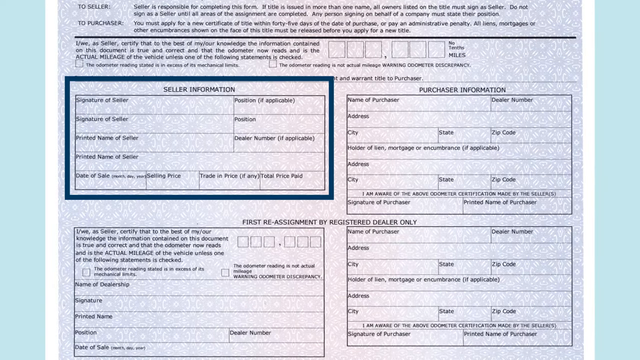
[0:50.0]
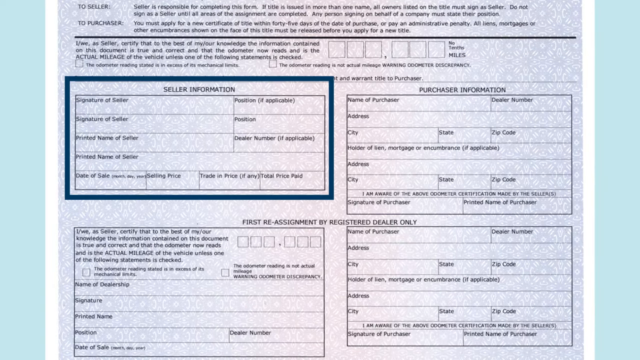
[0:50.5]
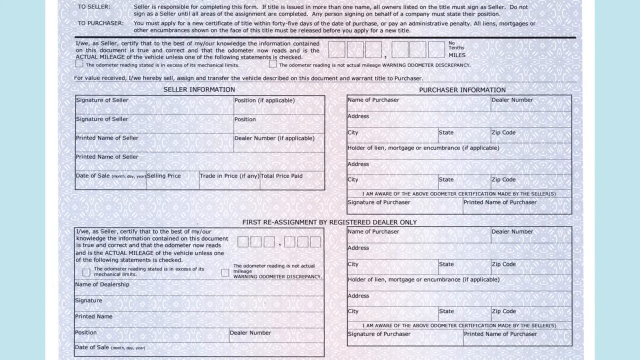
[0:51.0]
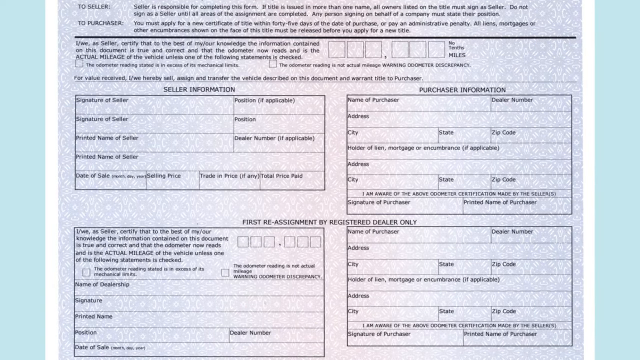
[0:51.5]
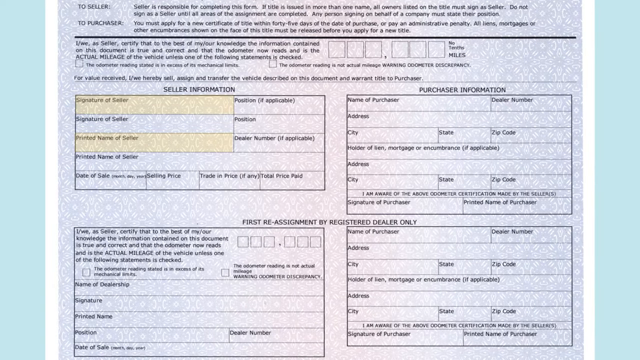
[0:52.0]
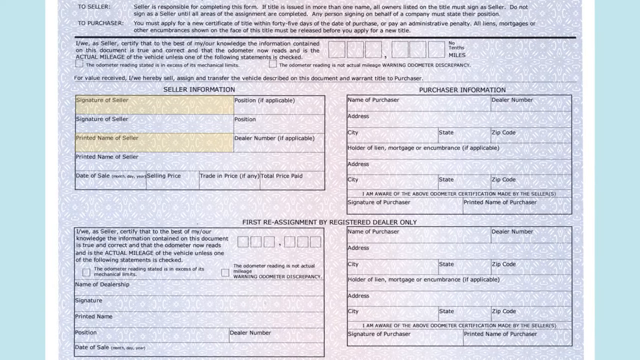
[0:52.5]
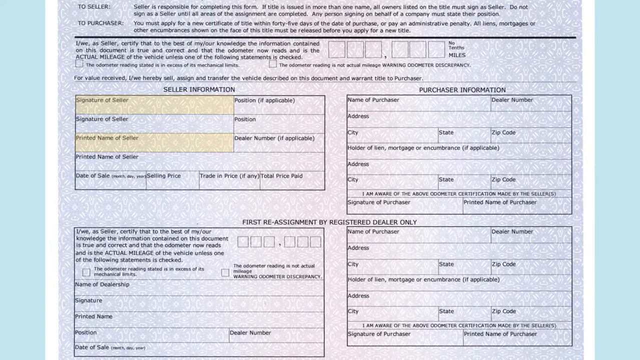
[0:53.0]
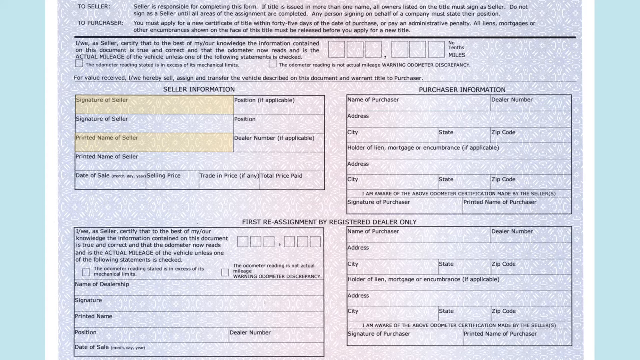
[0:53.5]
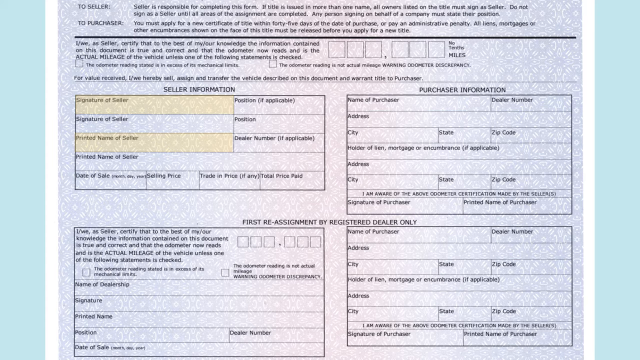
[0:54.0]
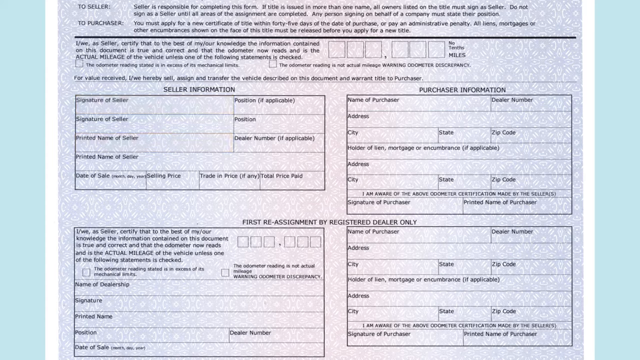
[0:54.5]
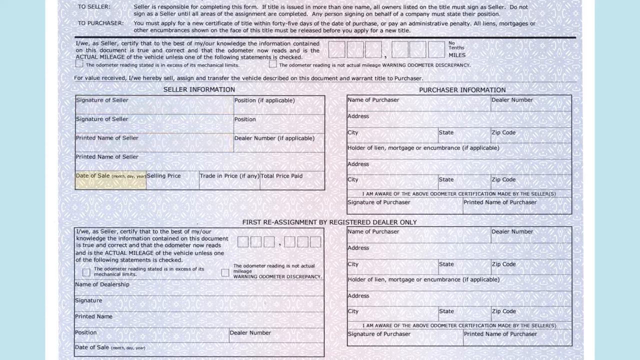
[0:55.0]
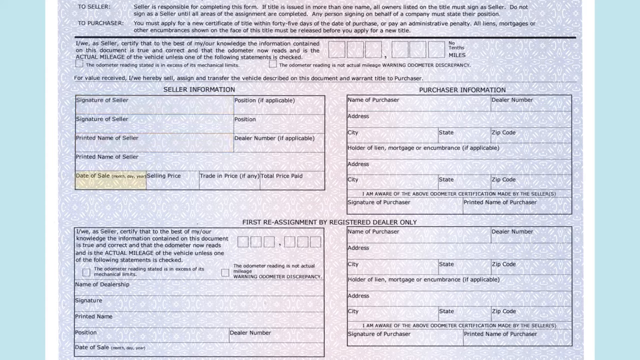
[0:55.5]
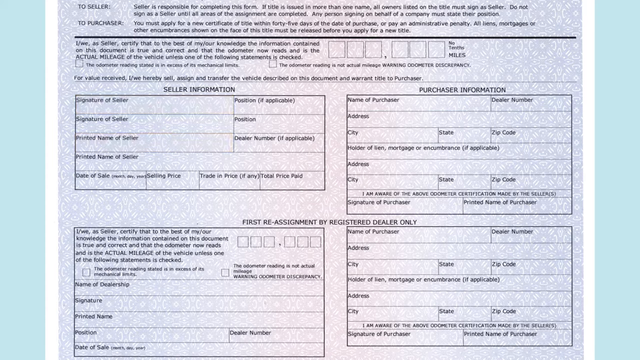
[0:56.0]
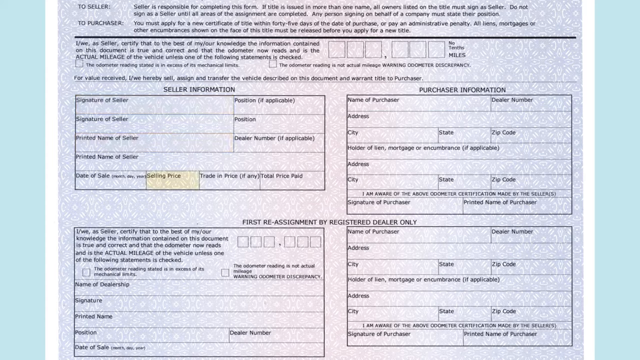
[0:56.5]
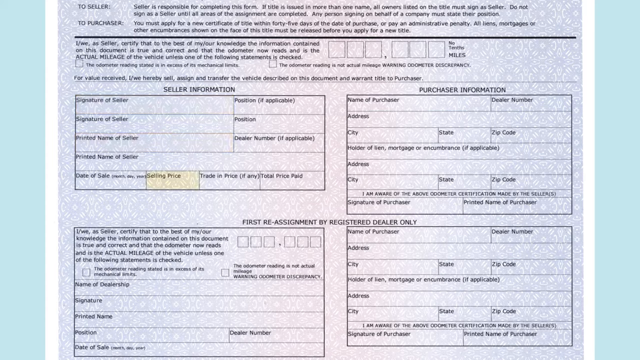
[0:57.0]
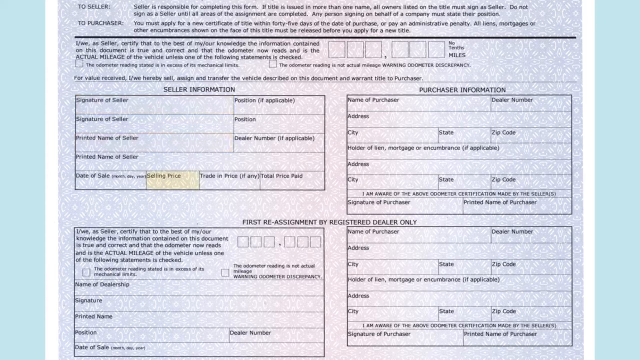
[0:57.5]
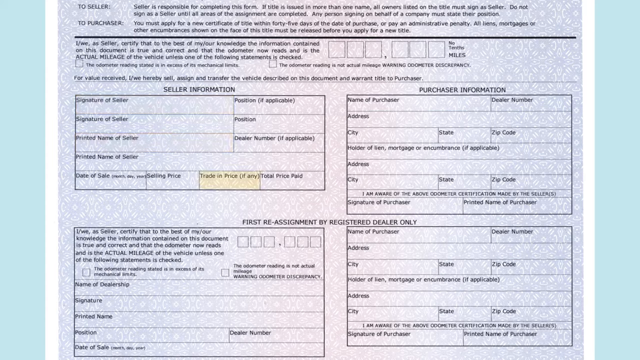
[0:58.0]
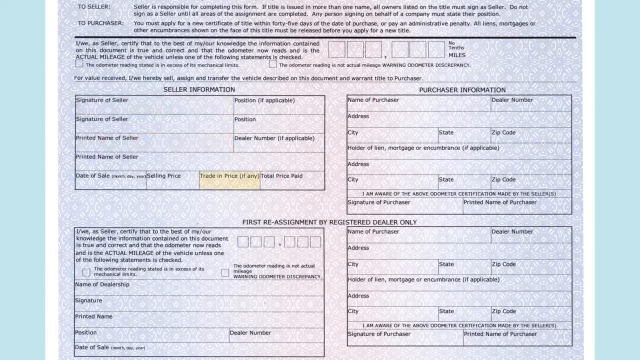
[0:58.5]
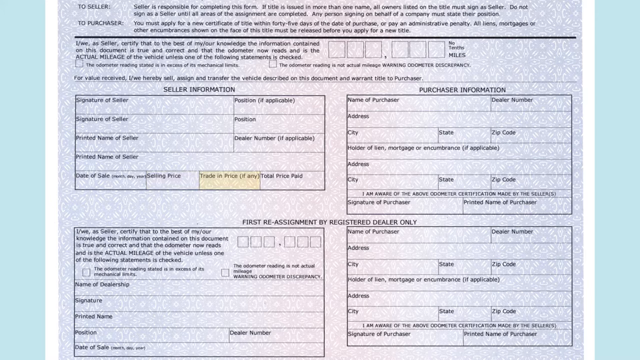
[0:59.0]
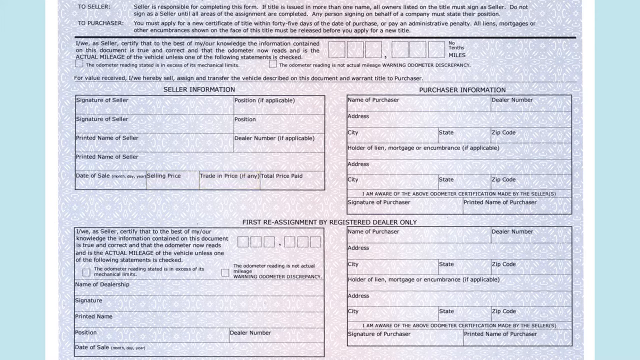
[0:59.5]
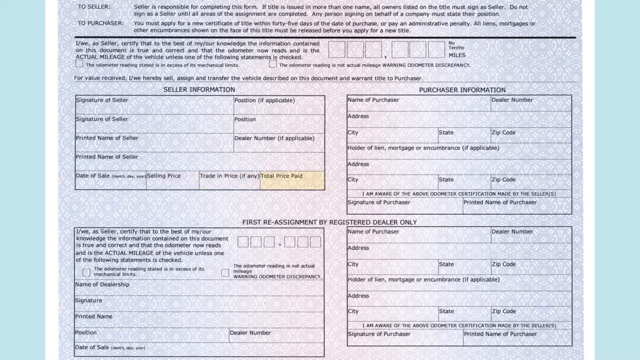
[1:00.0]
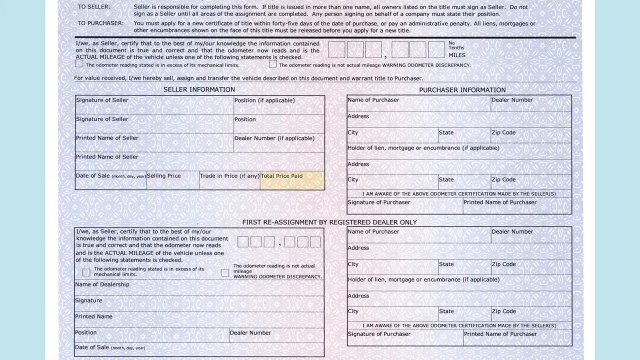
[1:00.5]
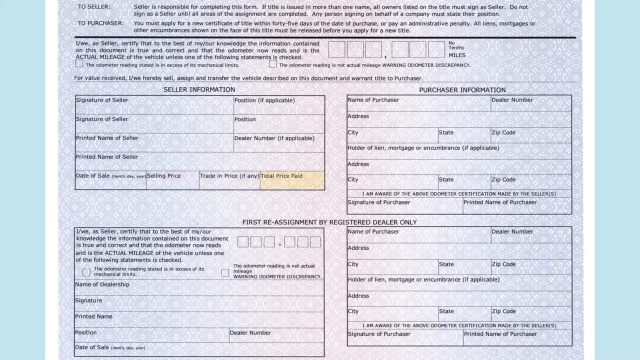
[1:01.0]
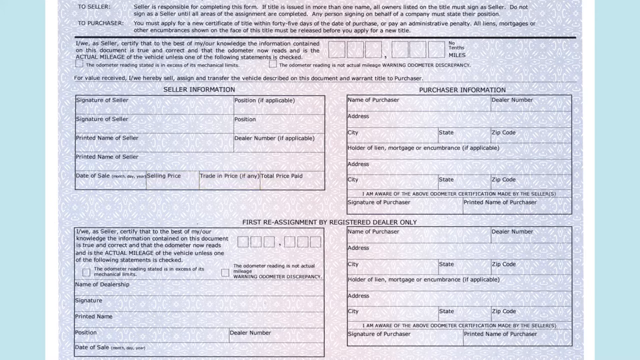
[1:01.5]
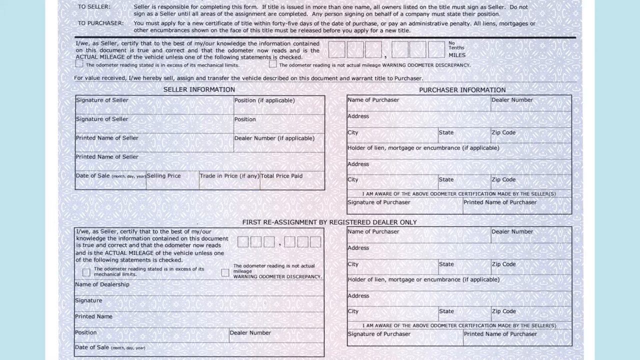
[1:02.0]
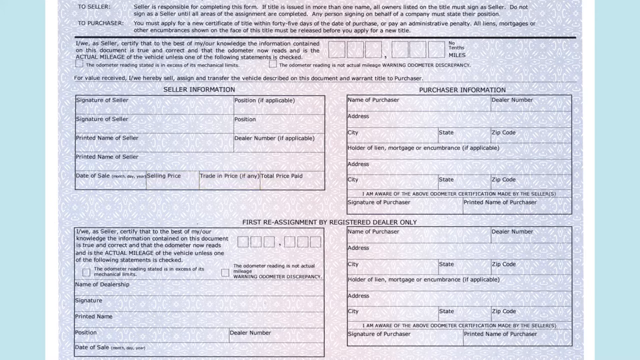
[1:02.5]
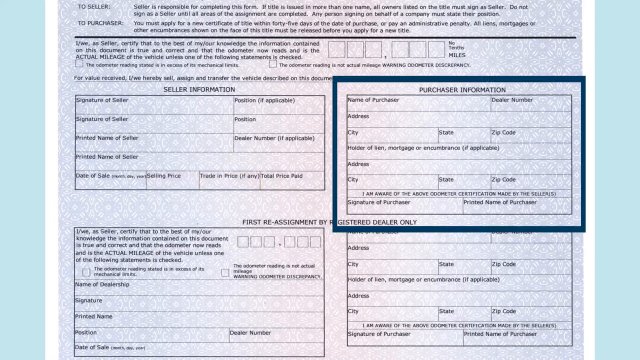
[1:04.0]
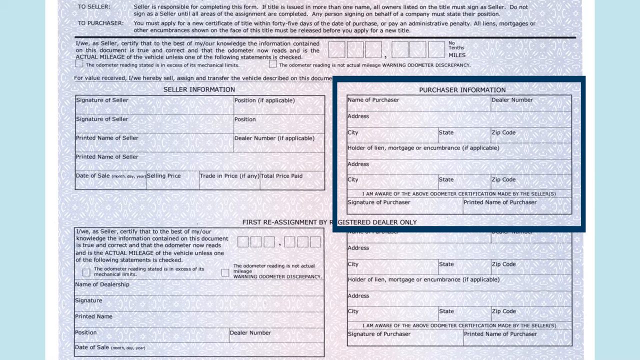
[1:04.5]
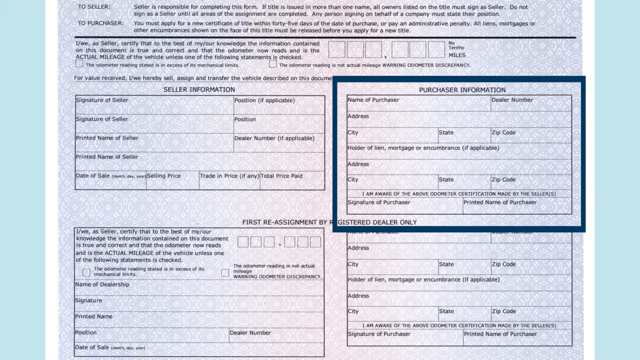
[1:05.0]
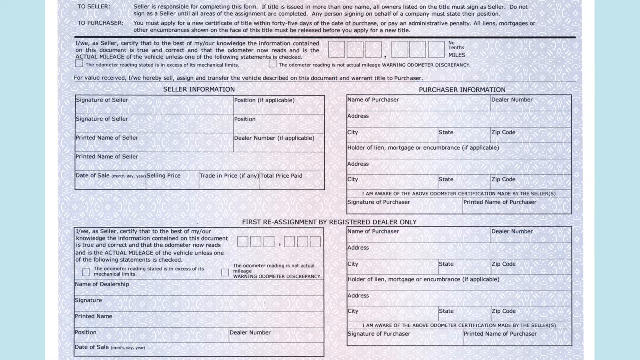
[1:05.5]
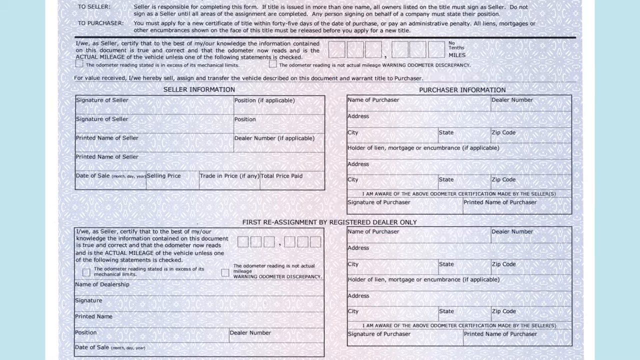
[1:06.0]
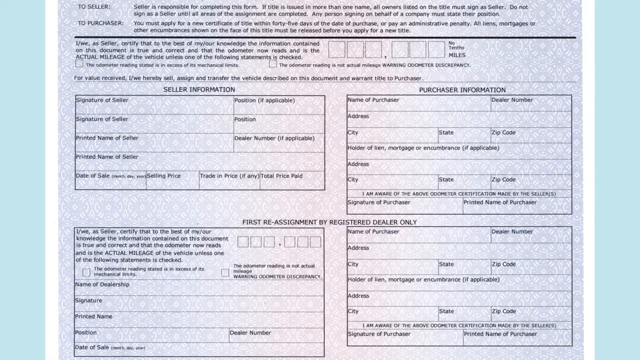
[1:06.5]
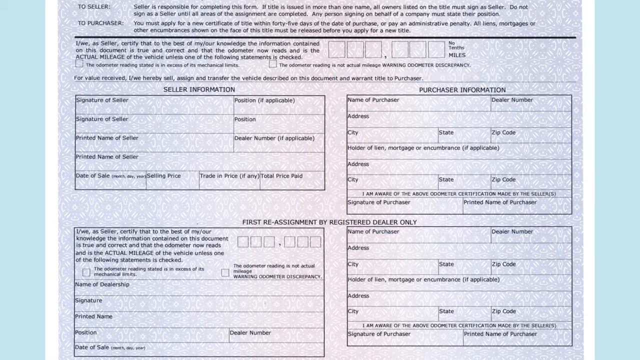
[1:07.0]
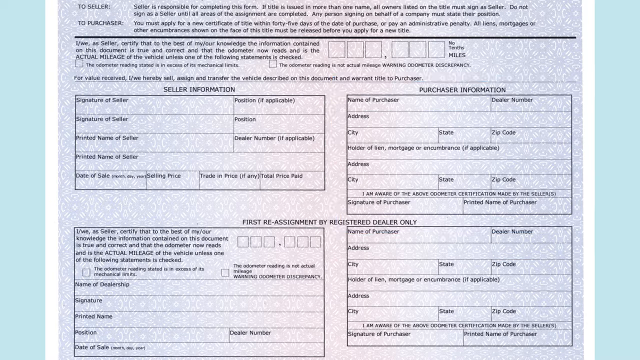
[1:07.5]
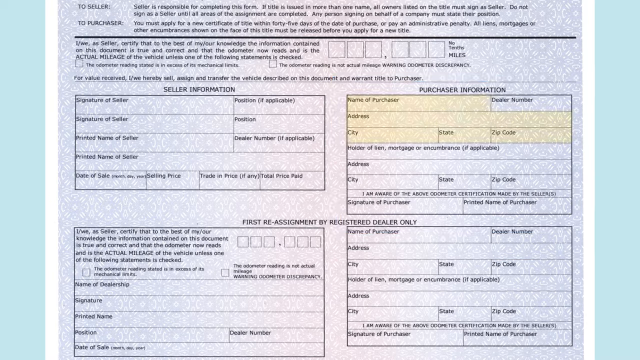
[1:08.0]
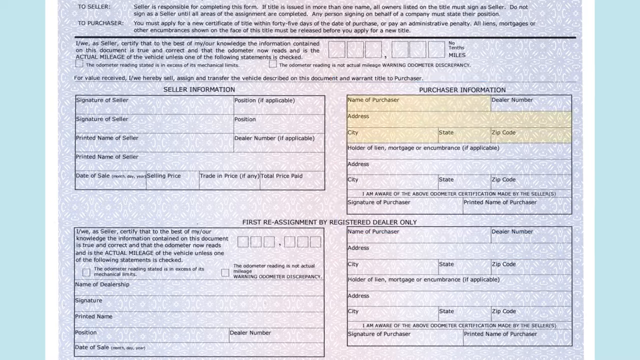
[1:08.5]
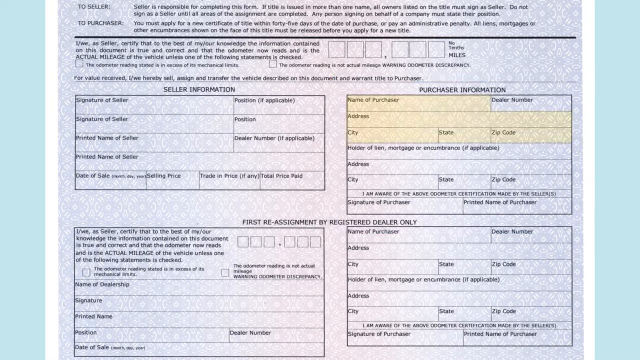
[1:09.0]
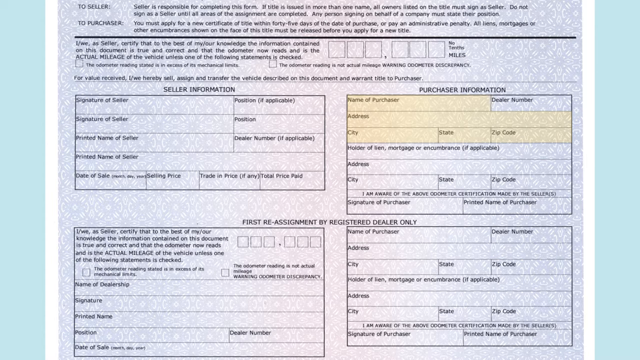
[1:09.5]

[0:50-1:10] The view remains on the back of the lien. The seller information area is highlighted in dark blue. The dark blue highlight goes away, and the areas labeled "signature of seller" and "printed name of seller" are illuminated in yellow. The selling price, the trade-in price, and then the total price light up in yellow one after another. The purchaser information section is then highlighted with a blue box around it, and under purchaser information the name of purchaser, address, city, state, and zip code are all highlighted in yellow.